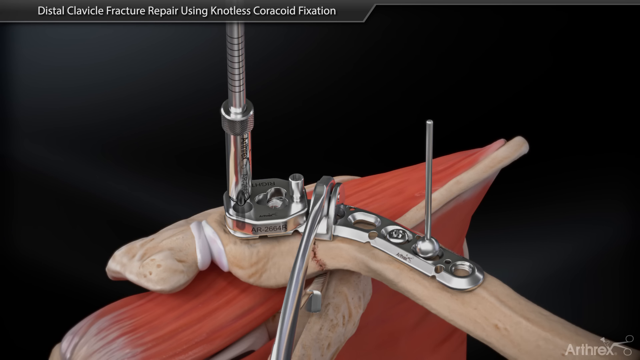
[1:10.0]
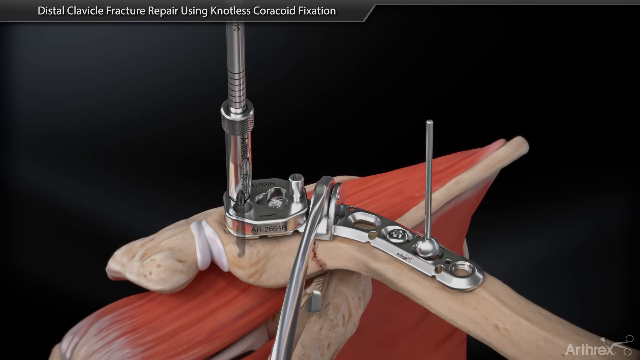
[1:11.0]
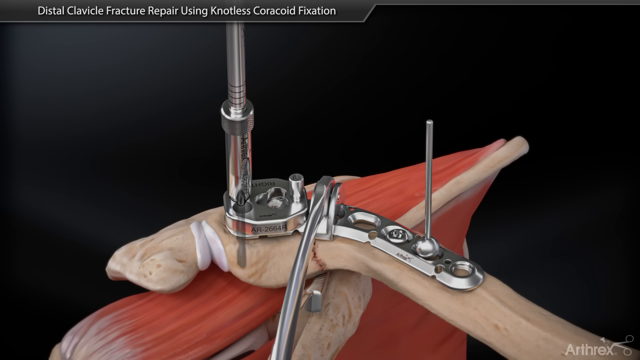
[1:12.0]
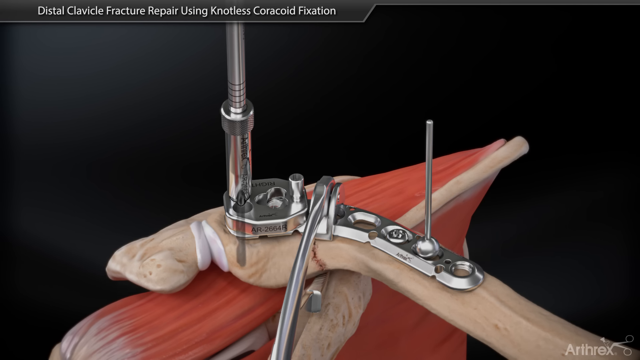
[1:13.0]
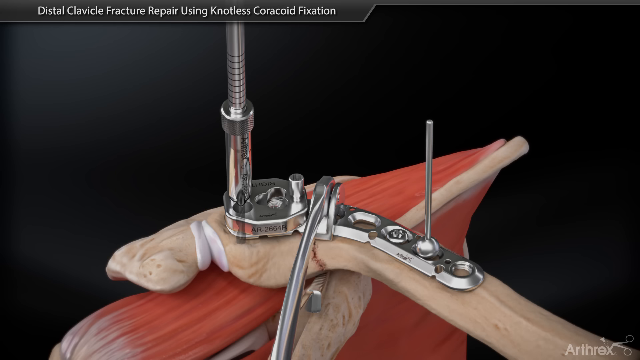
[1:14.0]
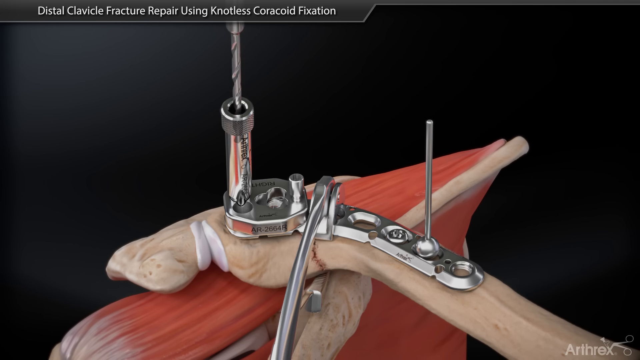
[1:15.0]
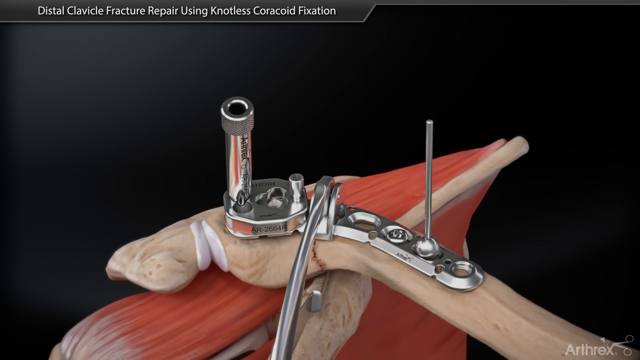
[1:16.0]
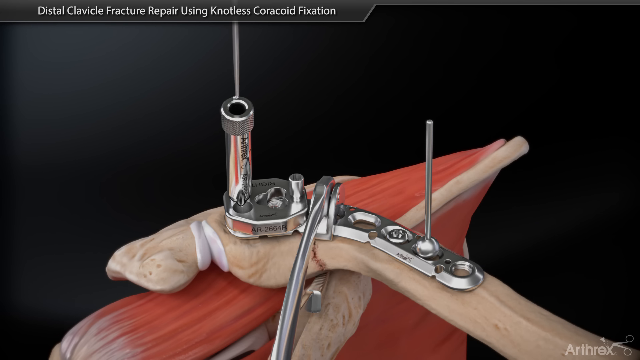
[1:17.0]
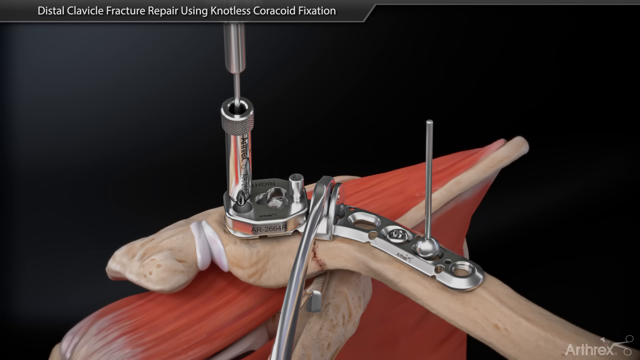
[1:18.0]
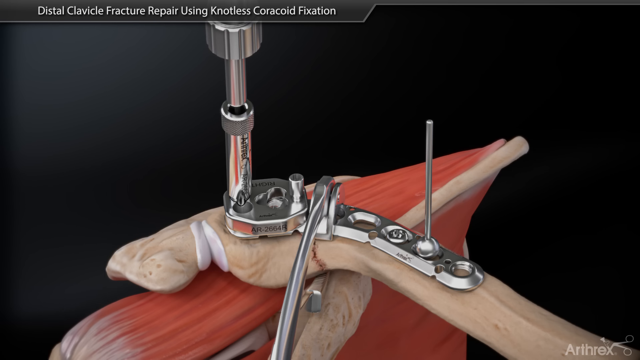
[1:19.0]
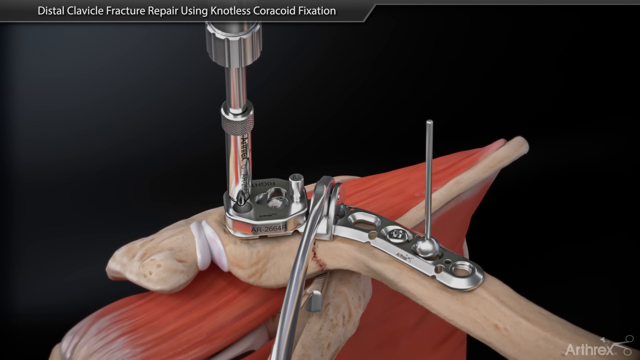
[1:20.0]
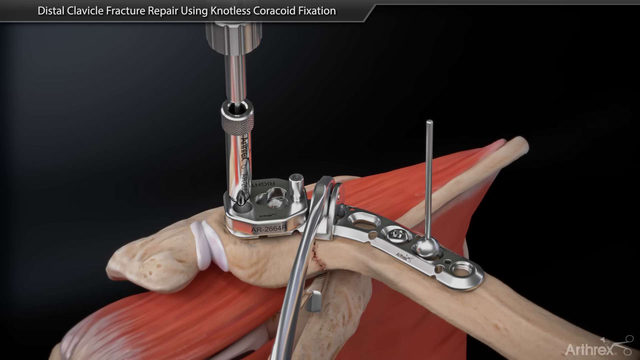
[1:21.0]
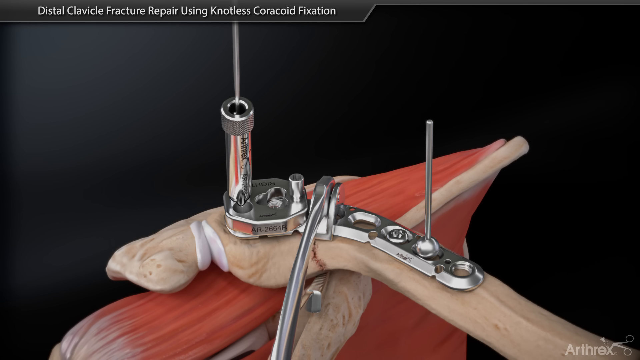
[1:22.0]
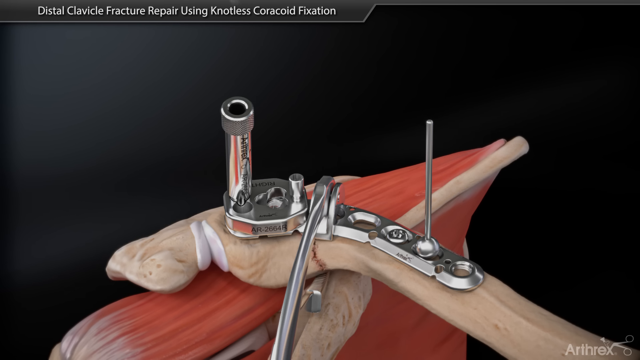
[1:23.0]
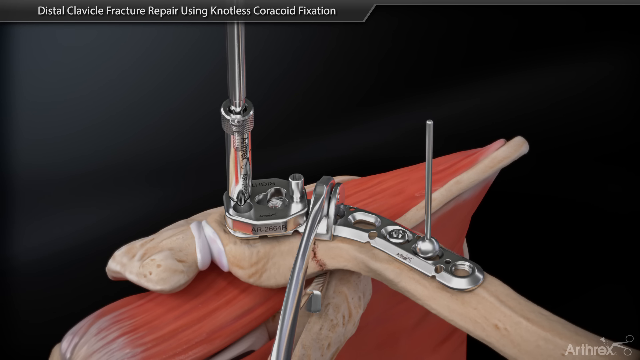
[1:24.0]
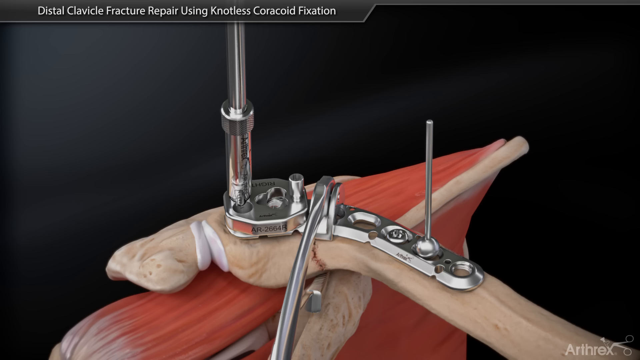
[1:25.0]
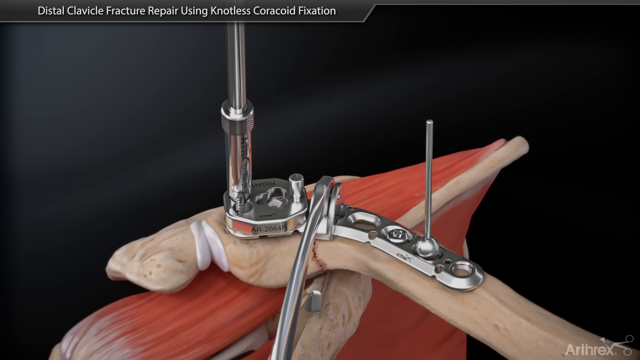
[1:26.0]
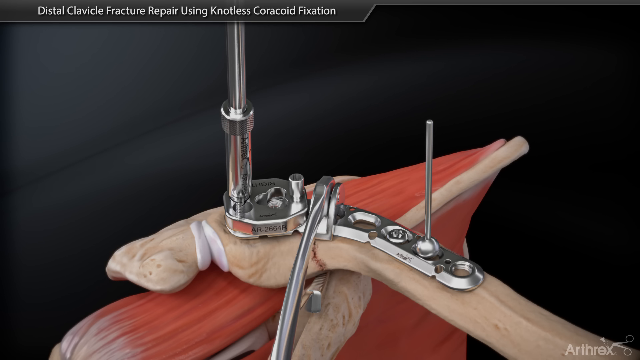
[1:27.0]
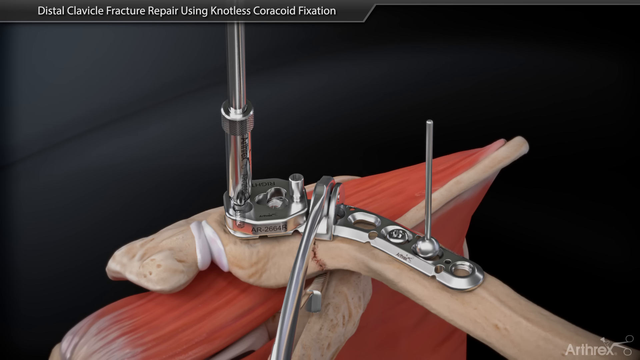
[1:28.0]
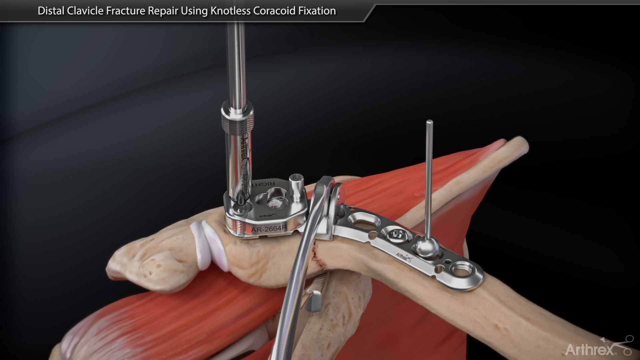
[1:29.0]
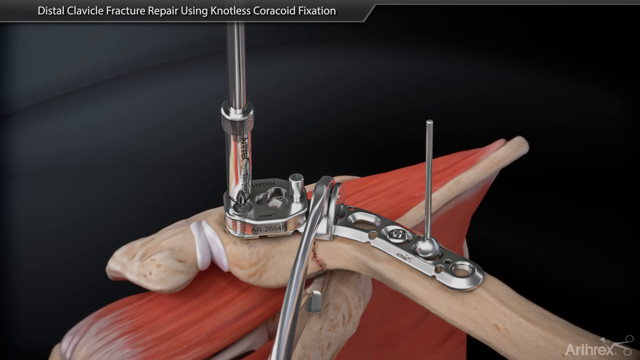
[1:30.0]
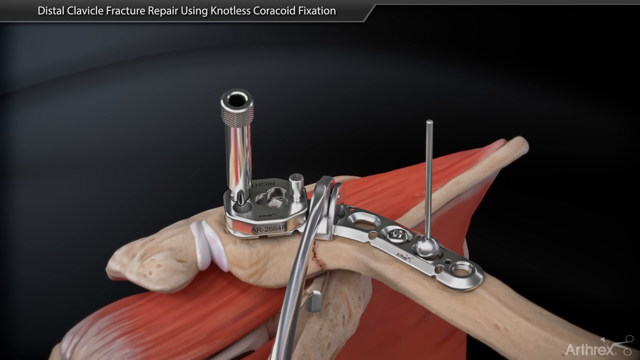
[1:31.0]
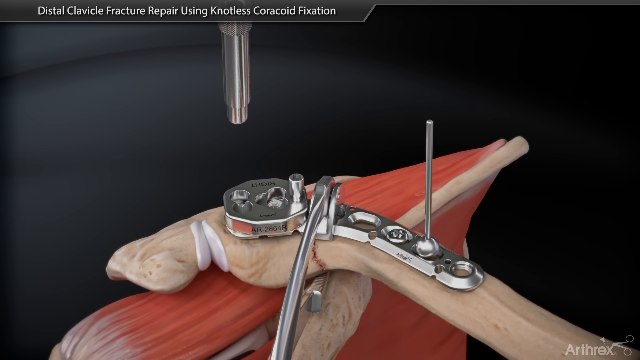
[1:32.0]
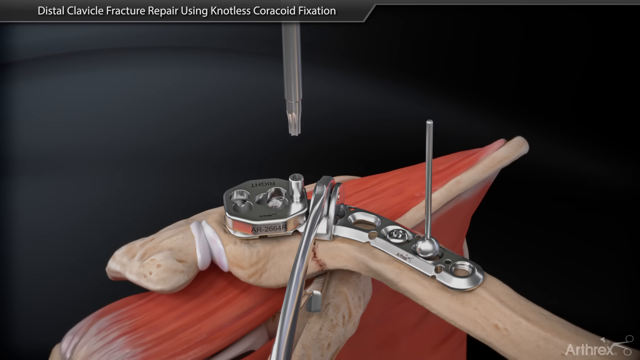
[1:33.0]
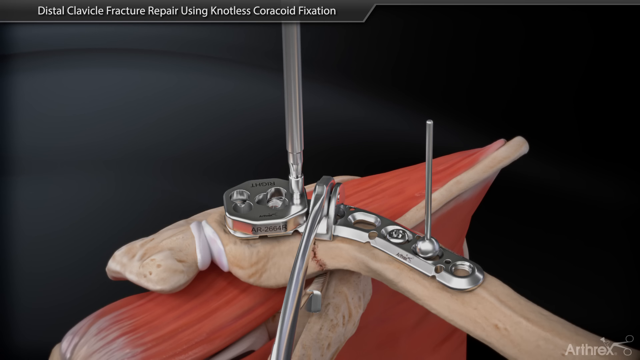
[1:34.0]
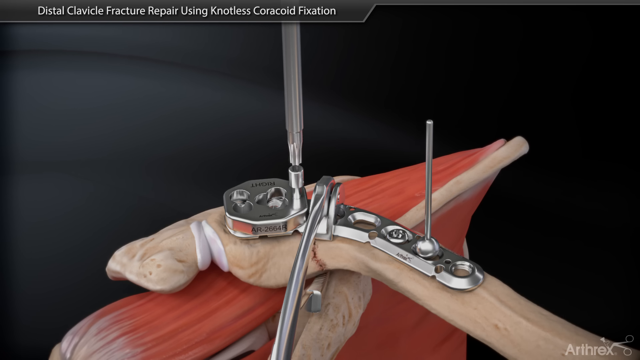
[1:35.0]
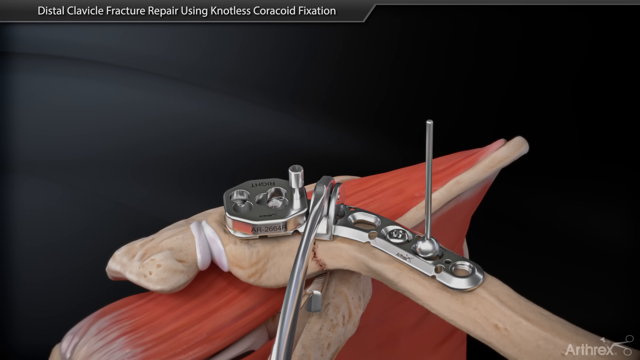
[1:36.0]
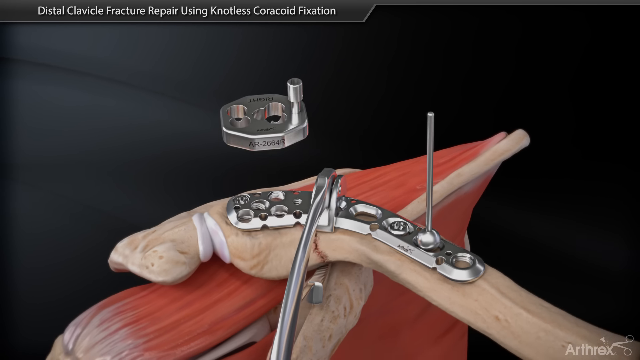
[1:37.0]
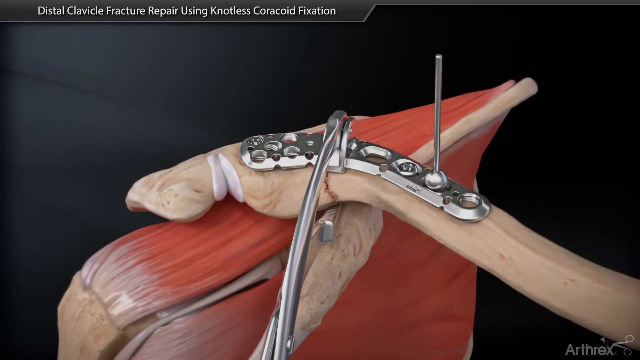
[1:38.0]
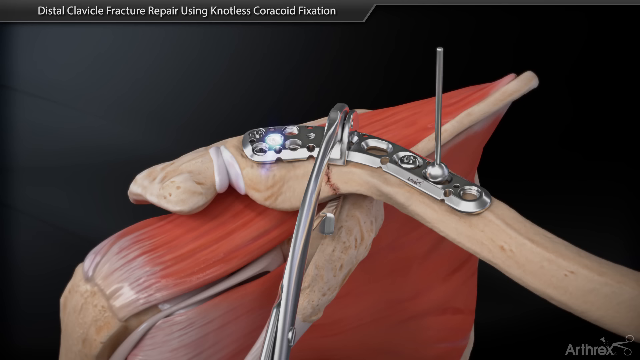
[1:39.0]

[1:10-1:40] Inside the little cylinder on the left side, a drill bit spins around, drilling a hole into the bone. The part on top comes down, then pulls out and goes off the top of the screen. A small pin comes down with a piece of metal attached, a cylinder on top with a little groove, pushes it into the freshly drilled hole, and takes it back out. A screw comes down from the top and is seen turning as it twists into the bone to attach the metal. The screwdriver part comes out and the cylinder comes out. The screwdriver then goes to the right portion that was attached, where the screw was not screwed in all the way, screws that screw out, and goes off the top right. That piece of metal goes up off the top right as the bone and muscle raise back up into their earlier position. Four of the other little holes underneath are then highlighted with a kind of little blue light shine, starting with the top left and going to the top right, the bottom right, and the bottom left.